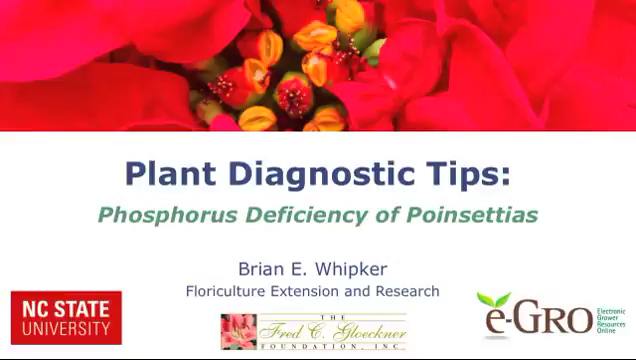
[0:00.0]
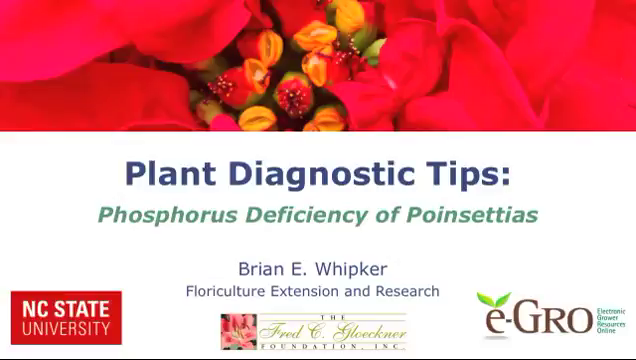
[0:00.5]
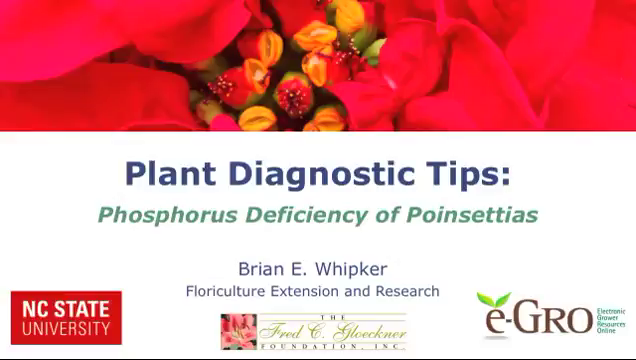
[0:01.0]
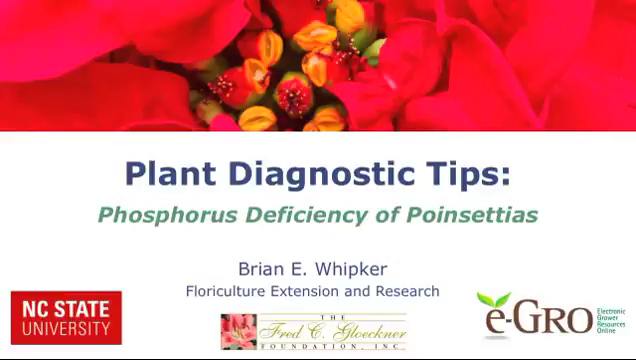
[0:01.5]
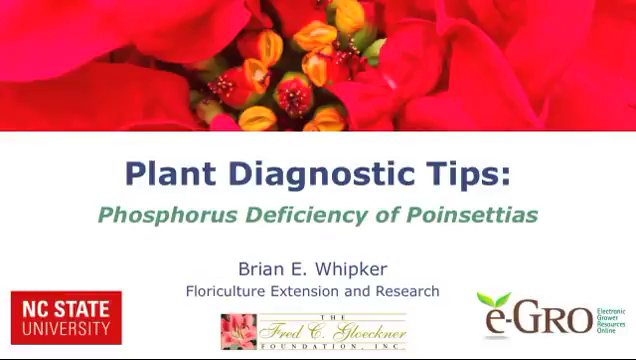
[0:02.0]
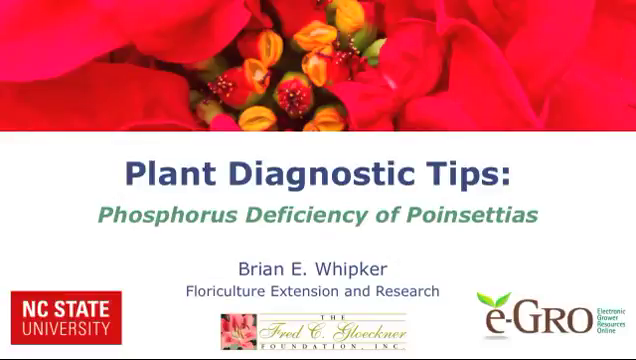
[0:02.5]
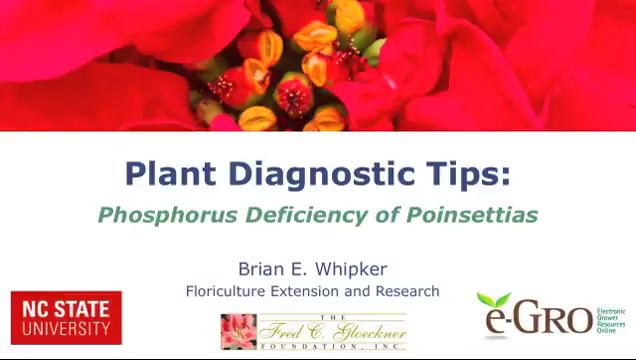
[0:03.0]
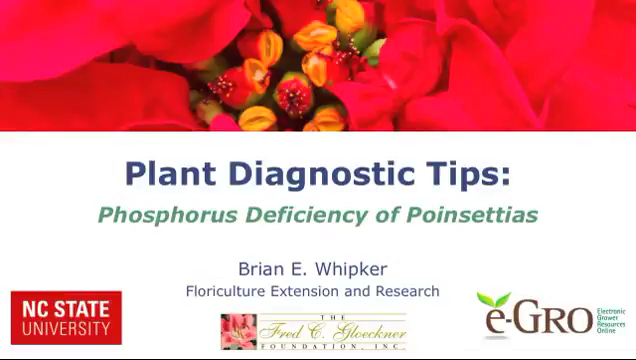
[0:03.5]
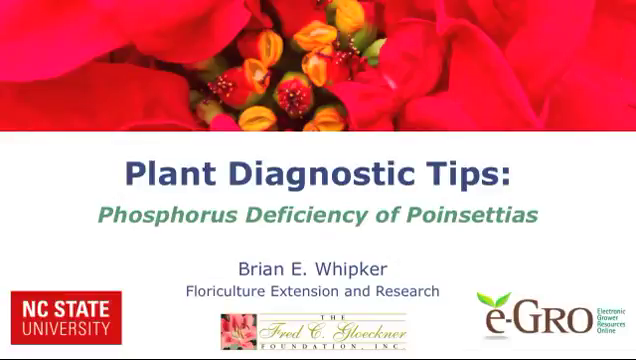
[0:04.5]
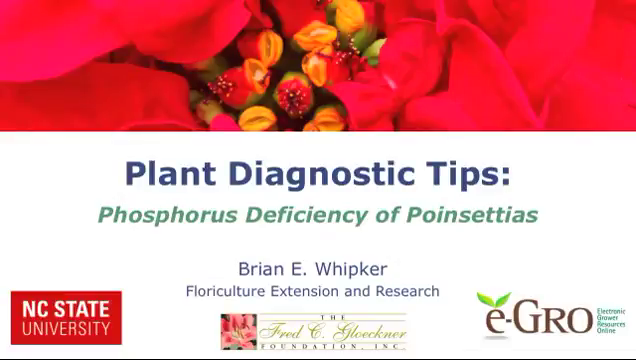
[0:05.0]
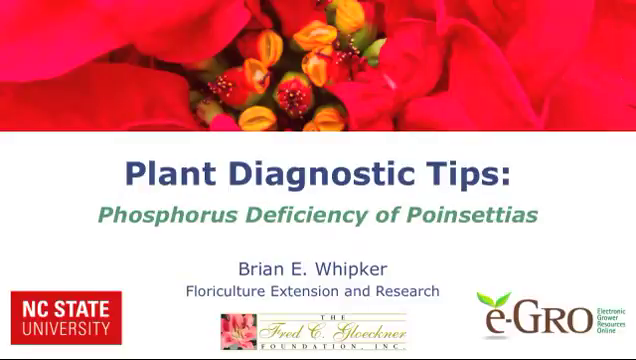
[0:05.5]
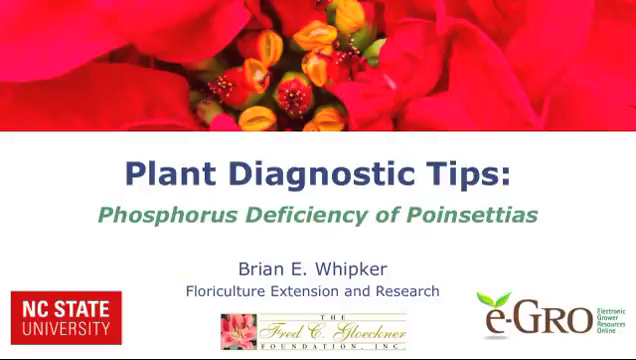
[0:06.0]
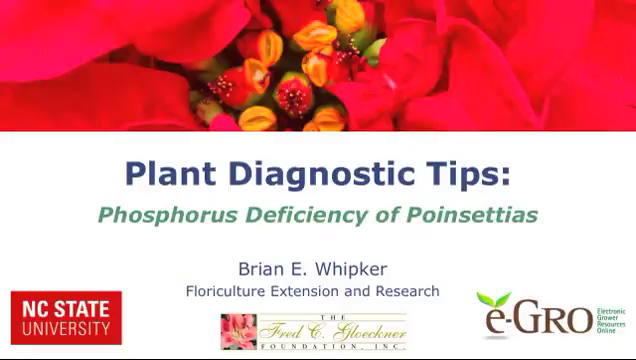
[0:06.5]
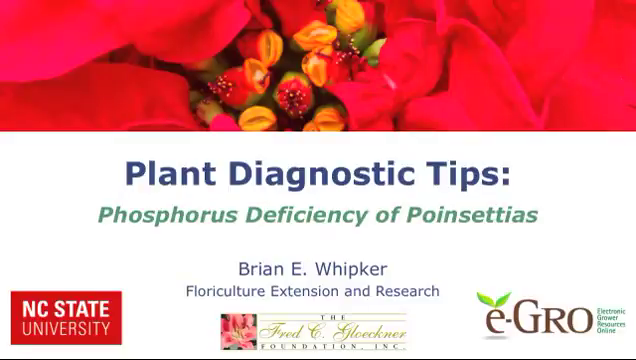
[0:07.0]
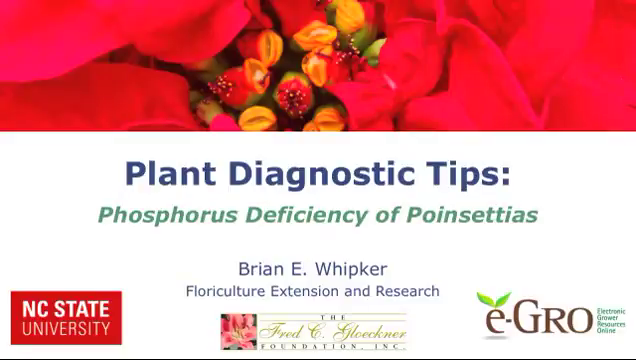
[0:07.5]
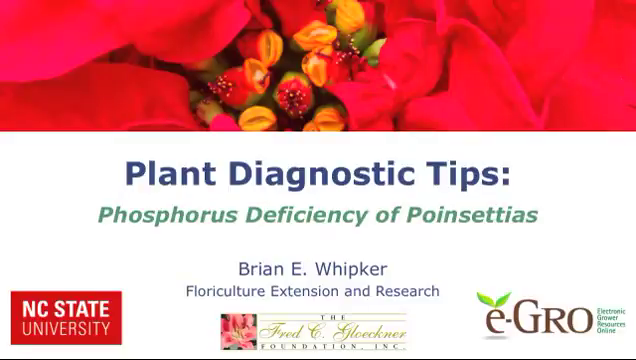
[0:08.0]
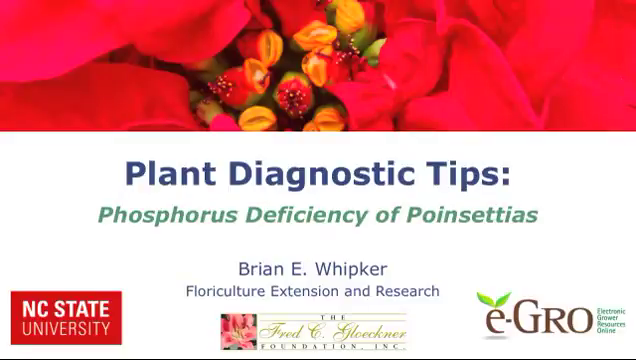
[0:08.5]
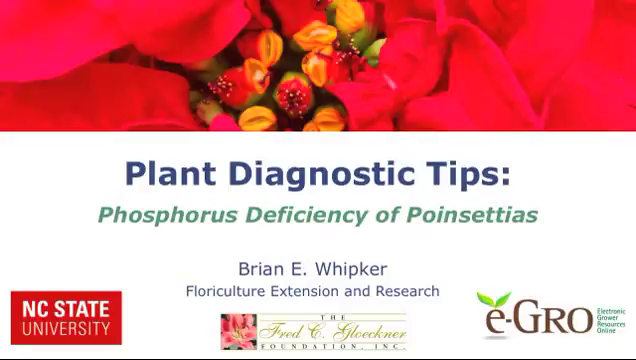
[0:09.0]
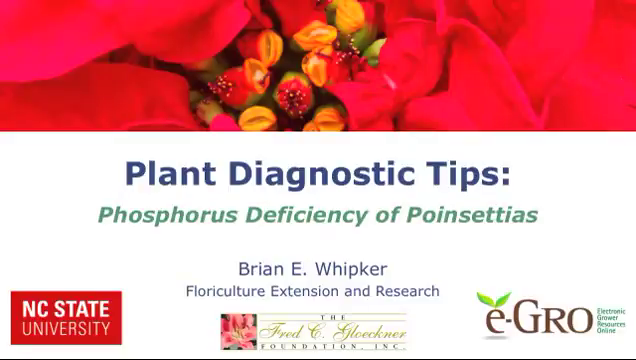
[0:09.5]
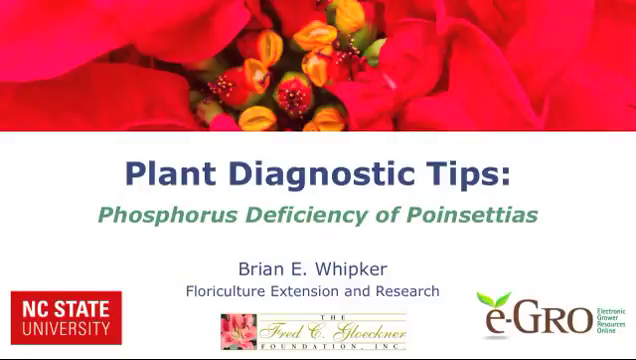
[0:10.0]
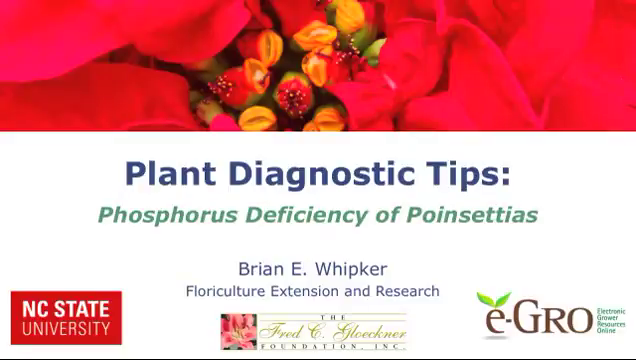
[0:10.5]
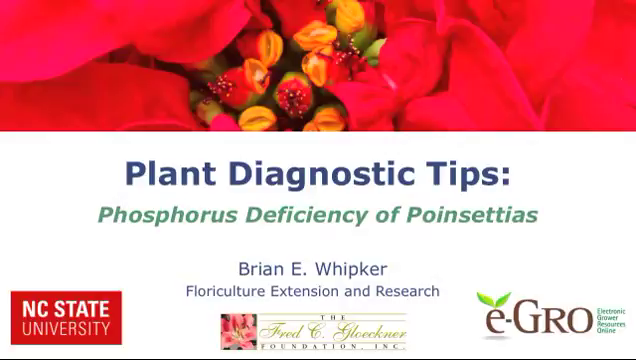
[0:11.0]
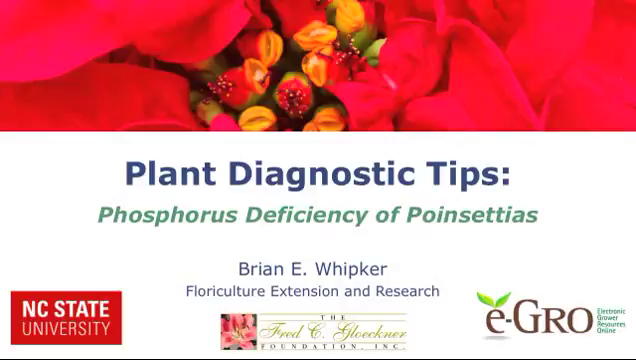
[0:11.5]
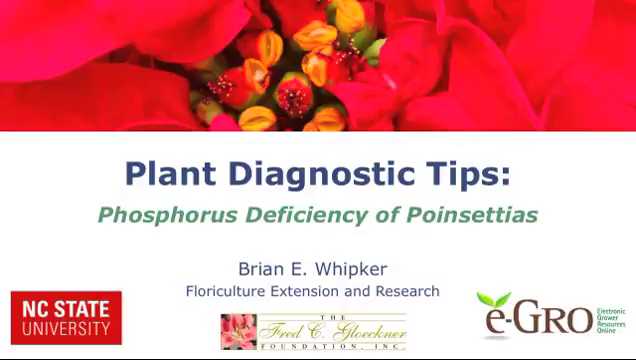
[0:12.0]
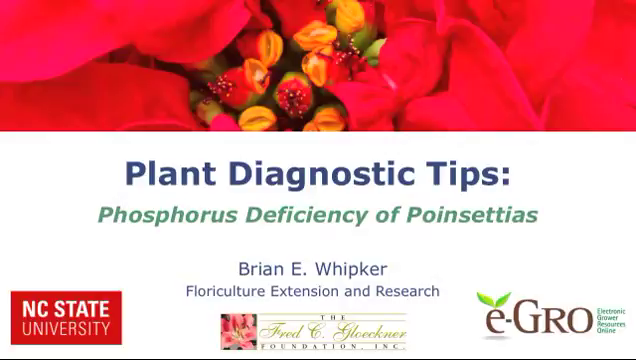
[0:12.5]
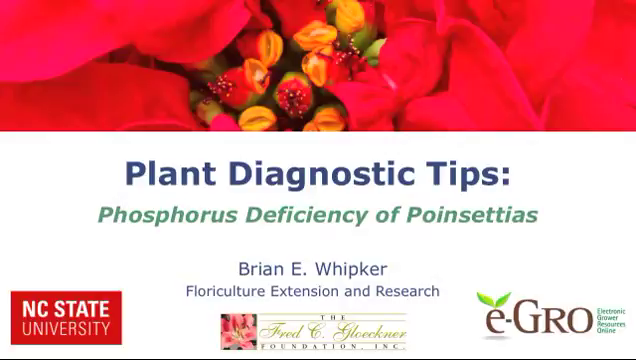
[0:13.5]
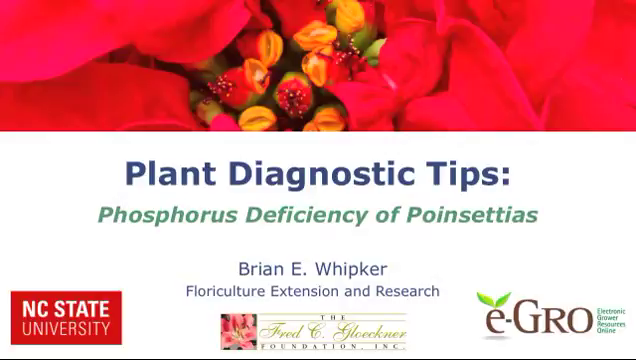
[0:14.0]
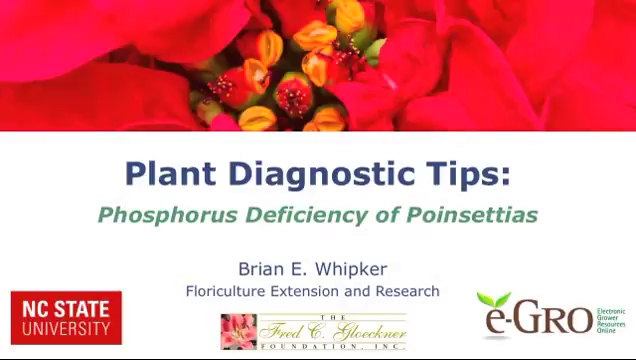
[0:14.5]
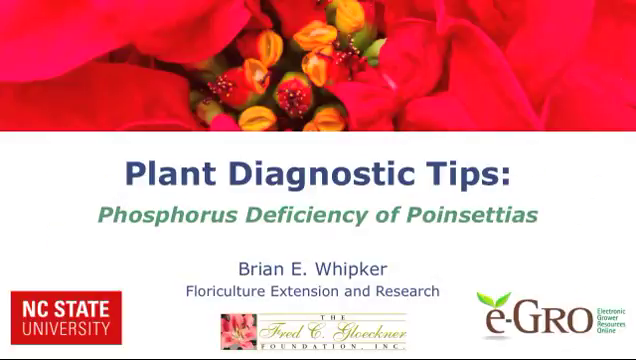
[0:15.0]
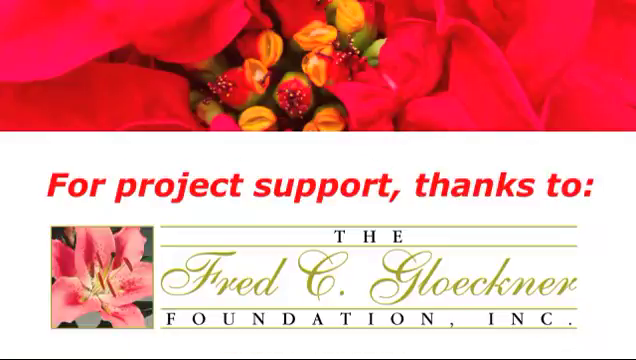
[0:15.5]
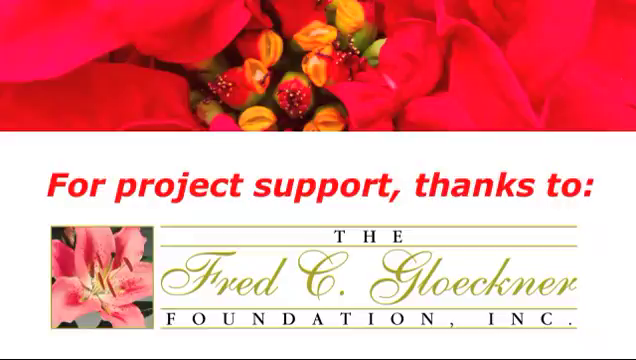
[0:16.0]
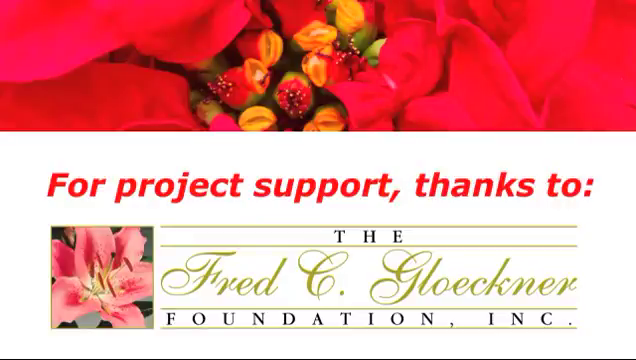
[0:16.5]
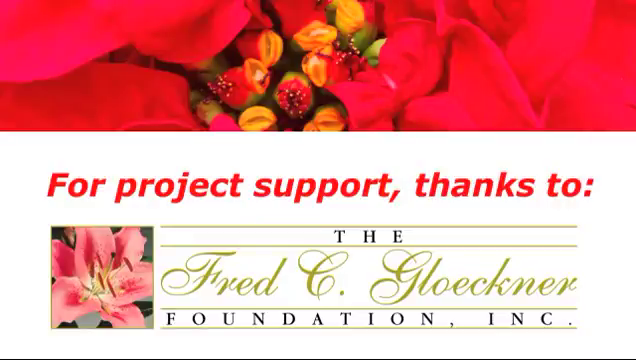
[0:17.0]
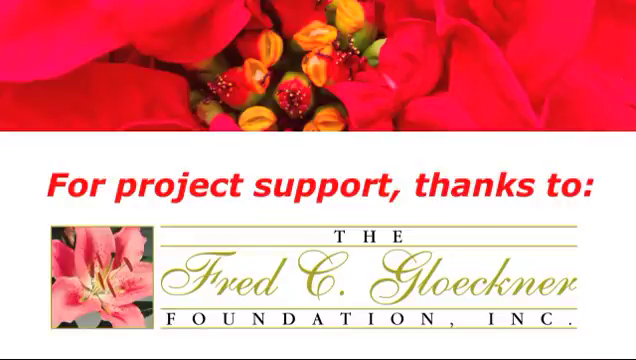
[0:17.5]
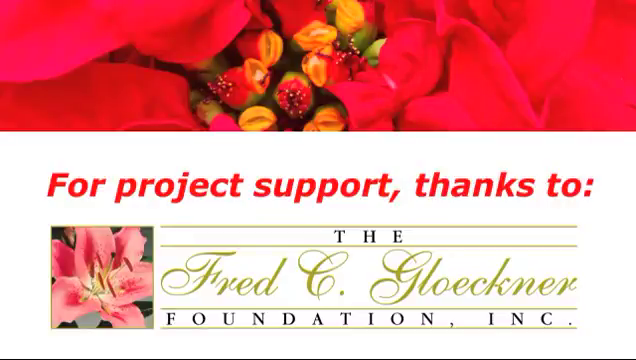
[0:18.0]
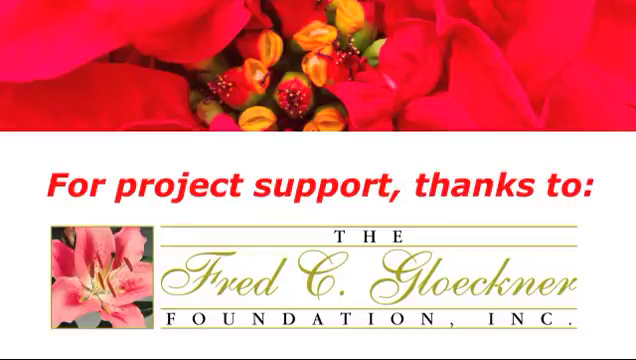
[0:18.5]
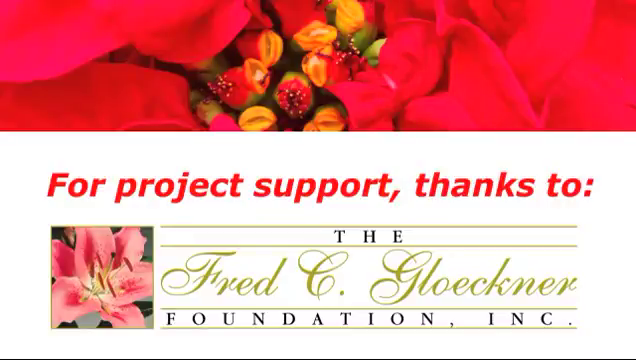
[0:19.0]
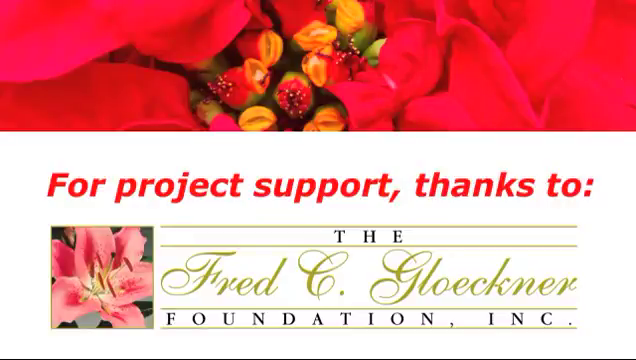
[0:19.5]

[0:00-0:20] The video opens with an illustration and text. In the center of the screen, blue lettering reads "plant diagnostic tips," and beneath it green lettering reads "phosphorus deficiency of poinsettias." At the top of the screen is a zoomed-in, high-definition photo of the center of a poinsettia; this illustration at the top is a red poinsettia that cuts off the top third of the illustration. In the bottom center, blue lettering reads "Brian E. Wipker Floriculture Extension and Research." There is an NC State University logo on the left, the Fred C. Glockner Foundation Inc. at the bottom, and eGrow Electric Grower Resource Online on the bottom right. All of the text is on a white background. The scene then transitions to another set of text: in the center, red text reads "for project support, thanks to," and the Fred C. Glockner Foundation Inc. label appears at the bottom center of the screen, with a picture on its left of a bright red flower that appears to be a poinsettia.